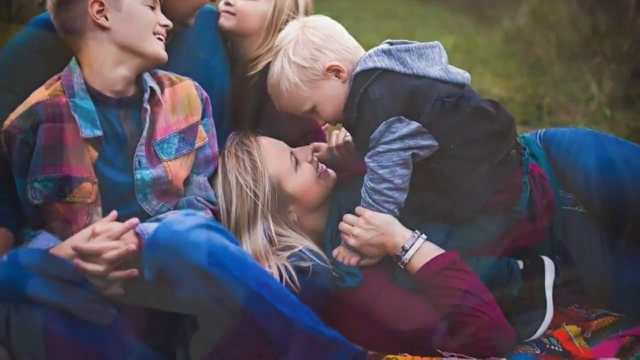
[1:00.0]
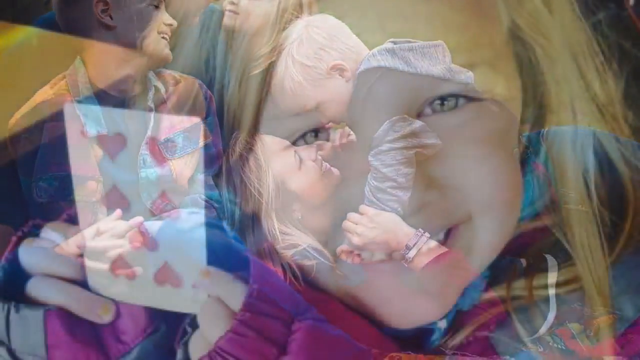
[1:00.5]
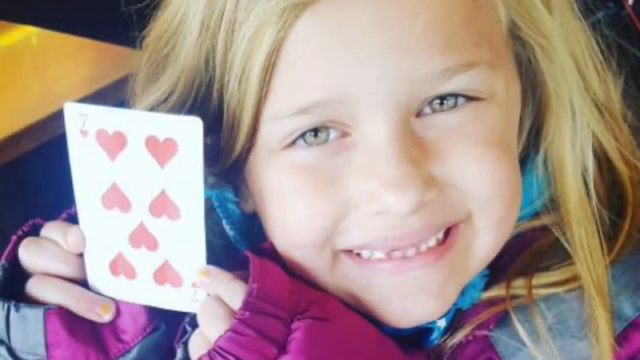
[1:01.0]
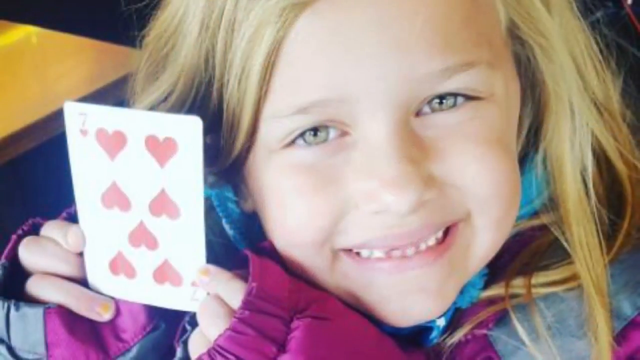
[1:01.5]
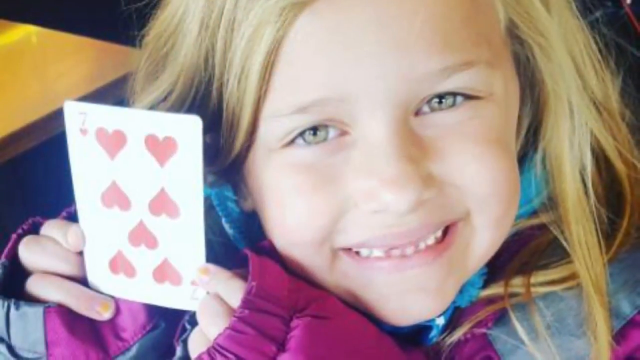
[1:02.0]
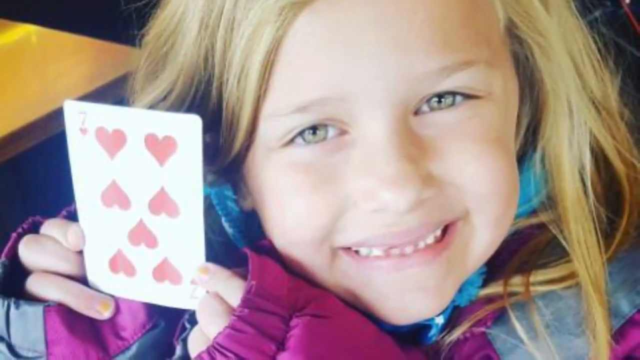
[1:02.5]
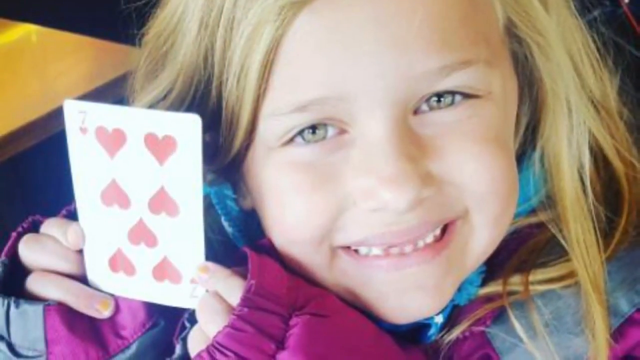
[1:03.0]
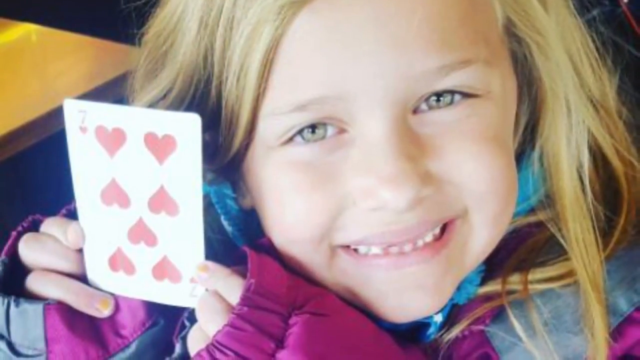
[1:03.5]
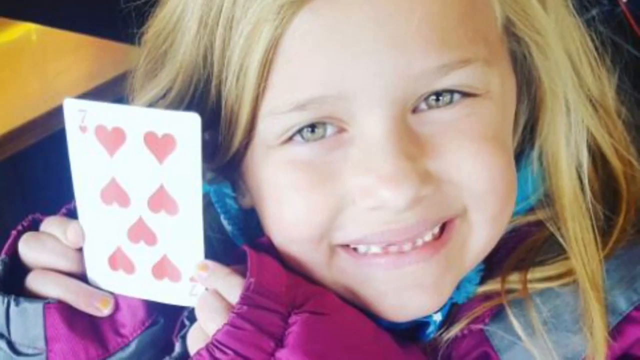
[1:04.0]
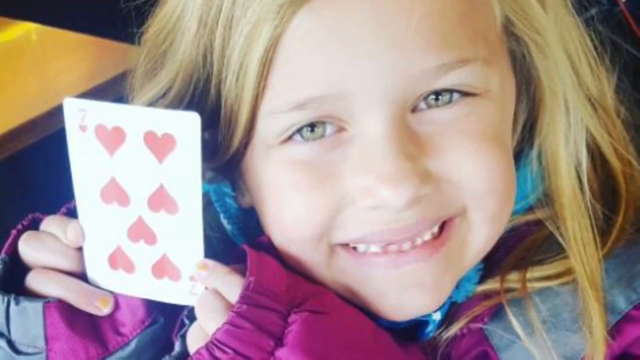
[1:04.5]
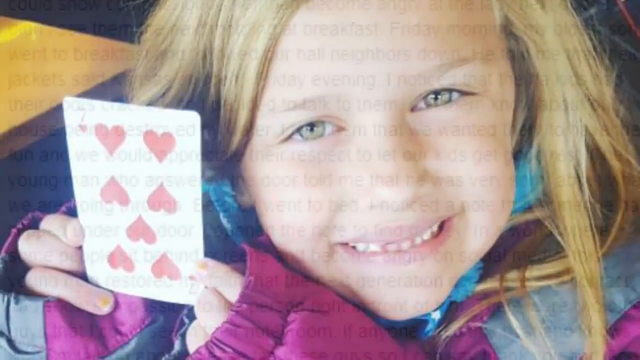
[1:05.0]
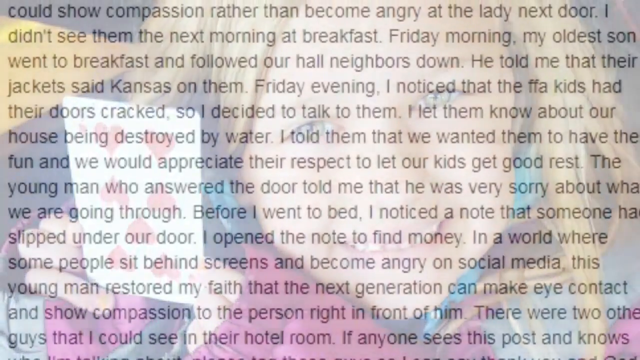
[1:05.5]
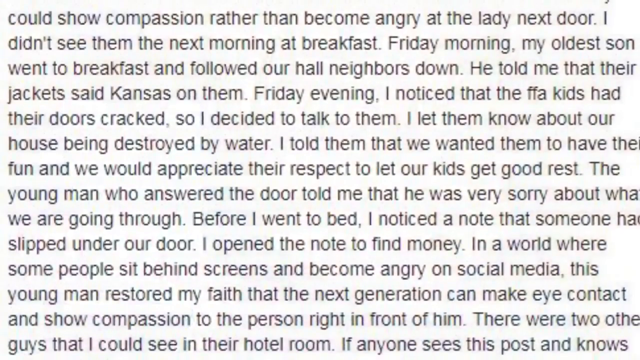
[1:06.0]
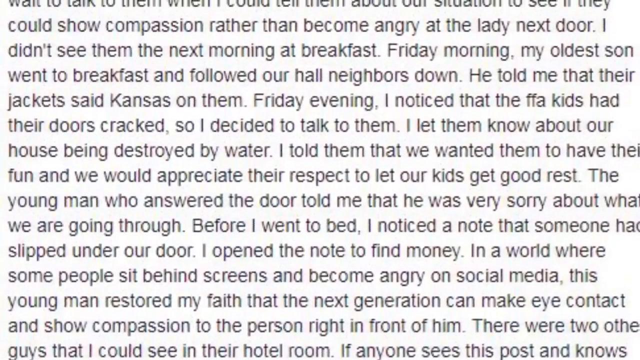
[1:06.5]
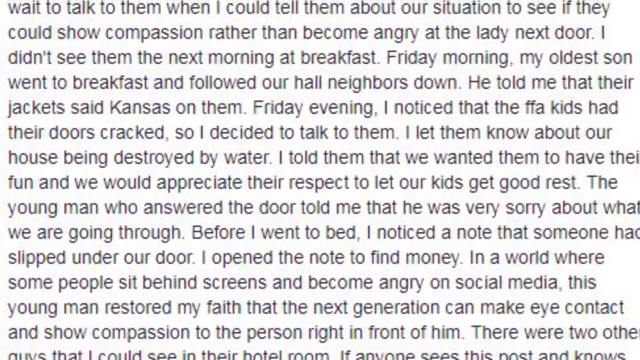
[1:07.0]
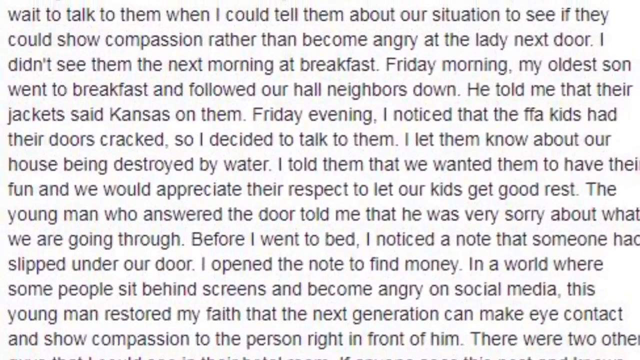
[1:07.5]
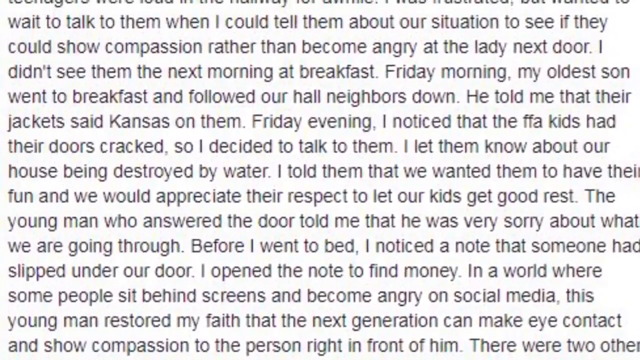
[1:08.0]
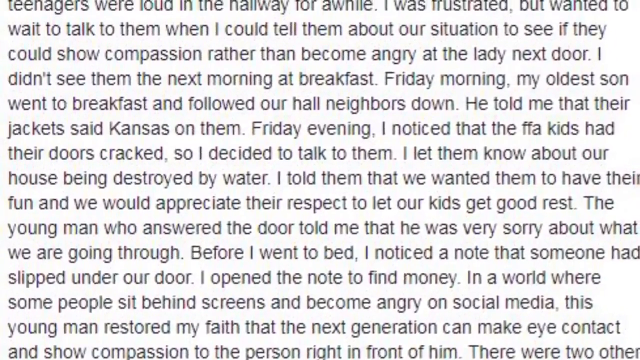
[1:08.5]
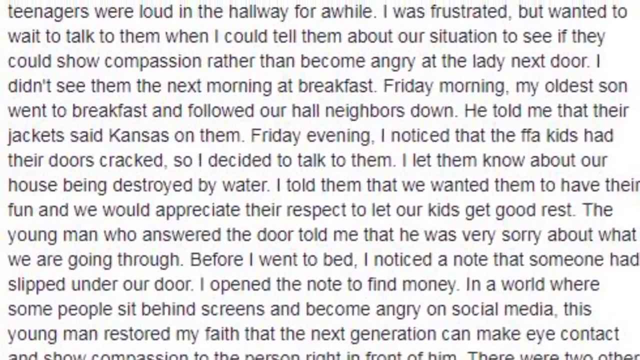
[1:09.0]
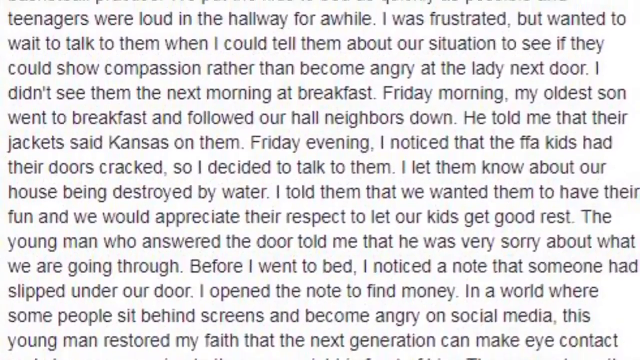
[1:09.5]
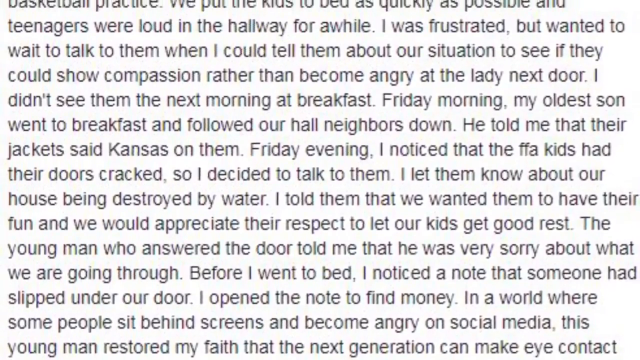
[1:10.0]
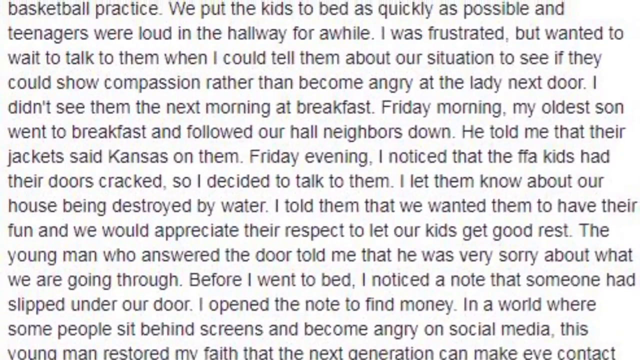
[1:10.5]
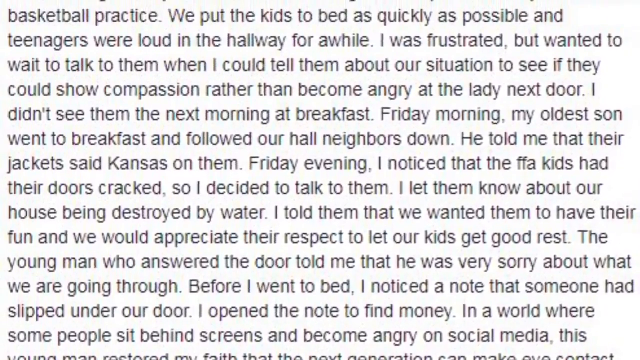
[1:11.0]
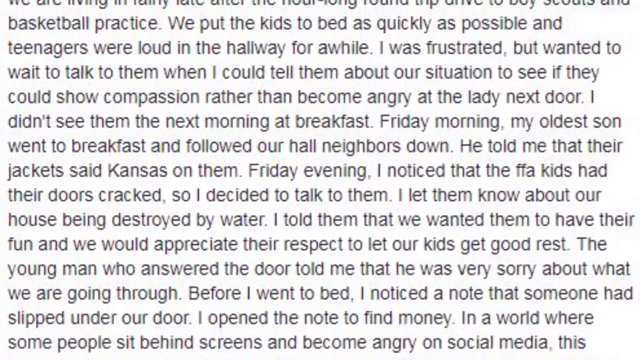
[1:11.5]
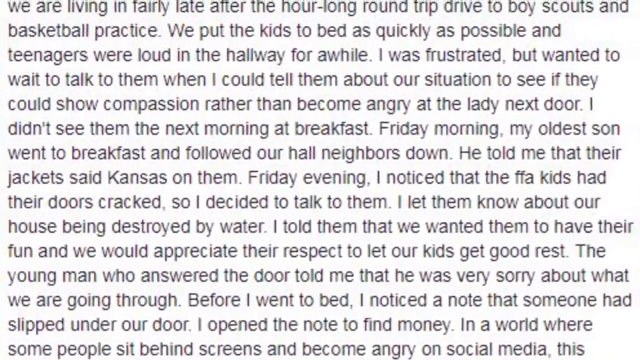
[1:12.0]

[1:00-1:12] A picture shows a family with some kids playing in the grass. A close-up shows a kid with blue eyes and blonde hair holding up a card, which looks like a seven of hearts, so it can be seen by the camera. The kid is wearing a jacket that is purple or pink and blue. A wall of text then pops up, black text on a white background, which looks like someone sharing a story about their situation.